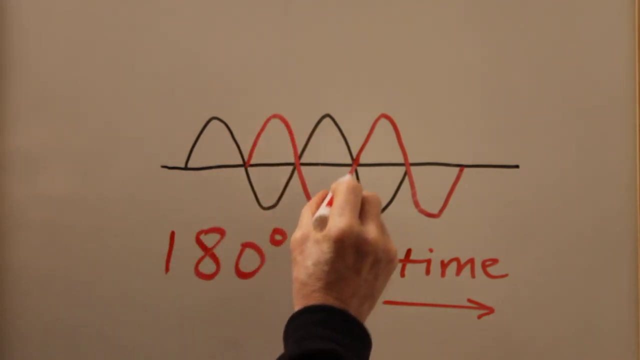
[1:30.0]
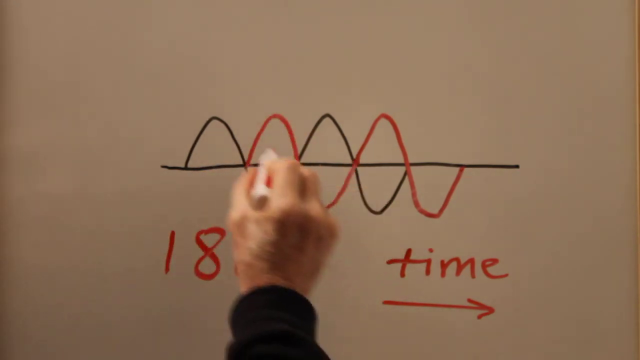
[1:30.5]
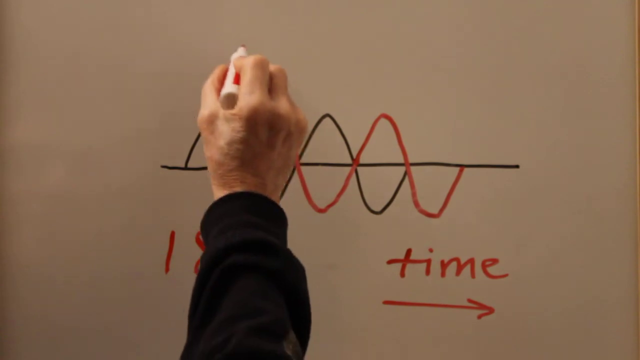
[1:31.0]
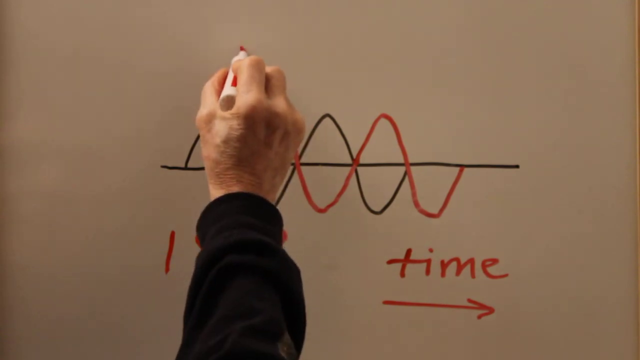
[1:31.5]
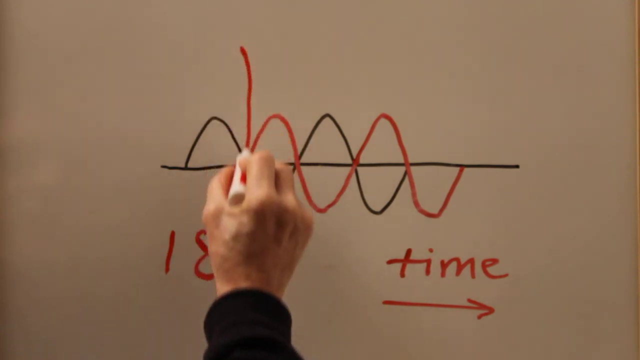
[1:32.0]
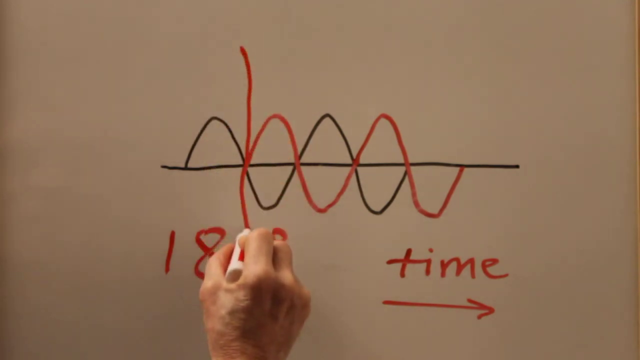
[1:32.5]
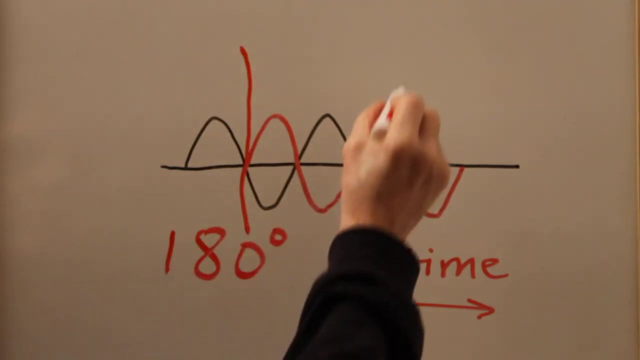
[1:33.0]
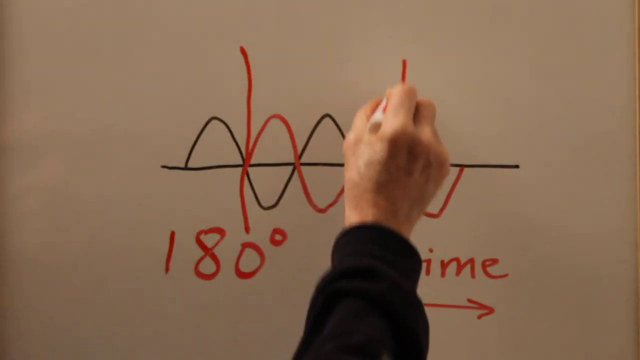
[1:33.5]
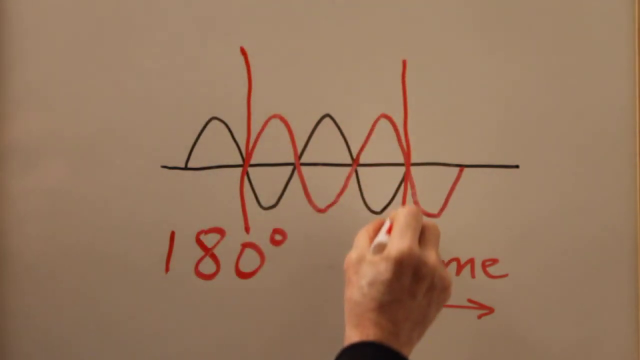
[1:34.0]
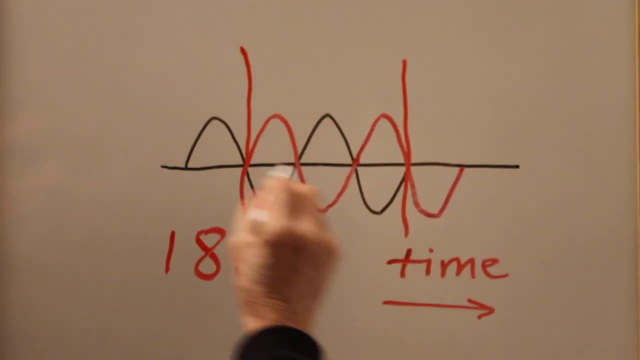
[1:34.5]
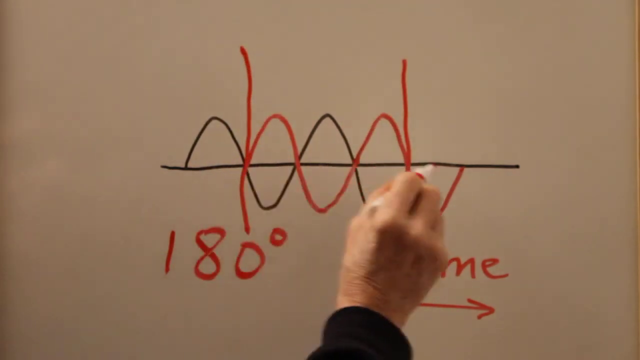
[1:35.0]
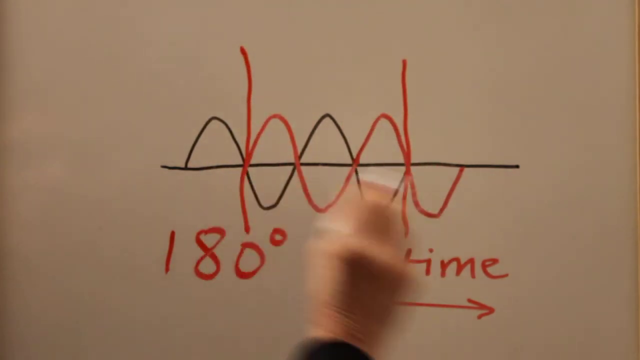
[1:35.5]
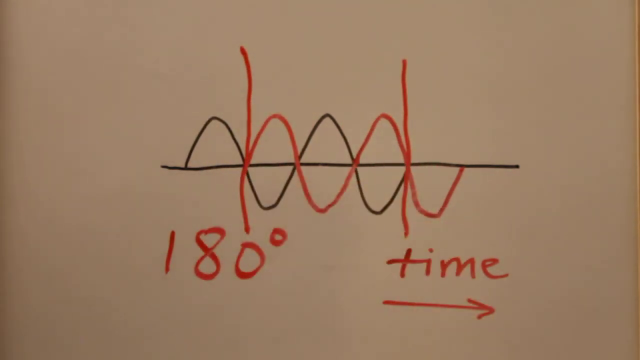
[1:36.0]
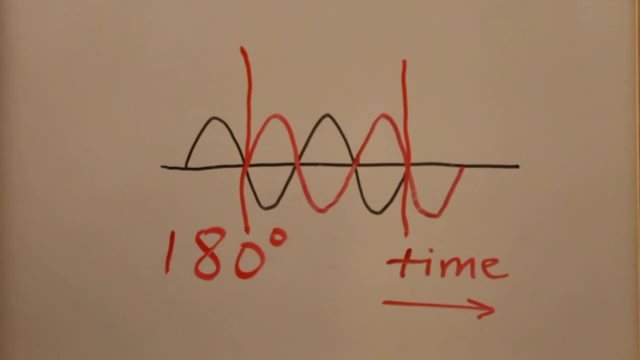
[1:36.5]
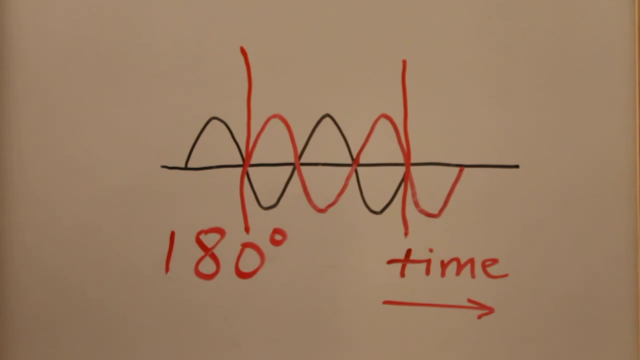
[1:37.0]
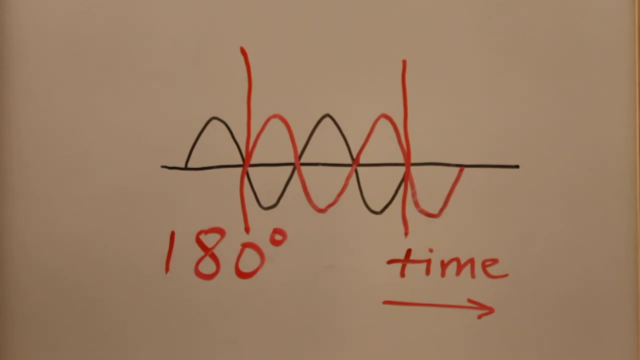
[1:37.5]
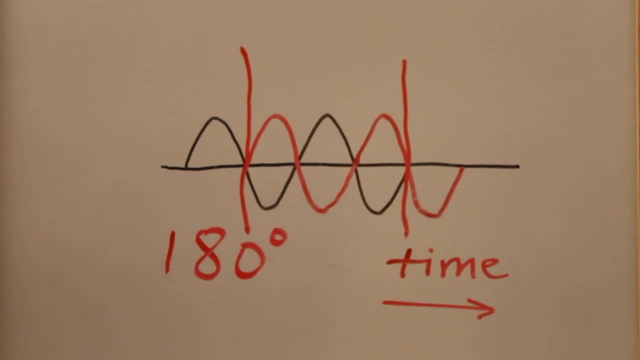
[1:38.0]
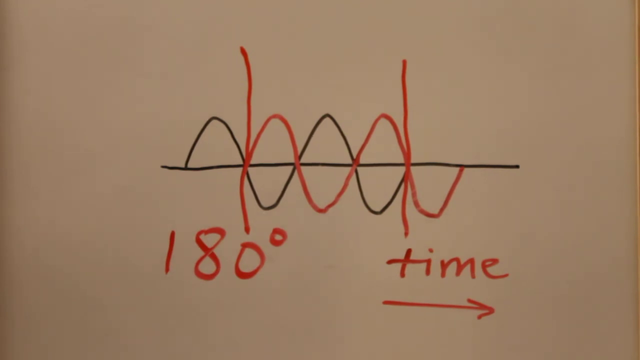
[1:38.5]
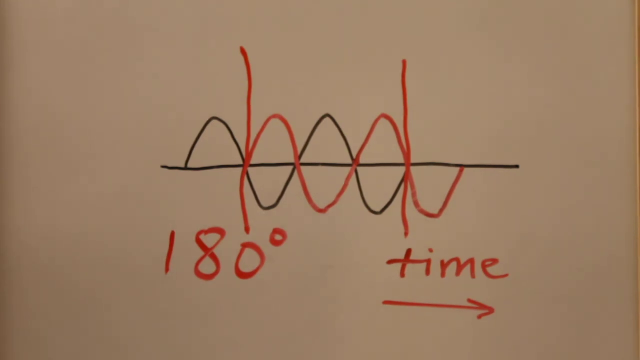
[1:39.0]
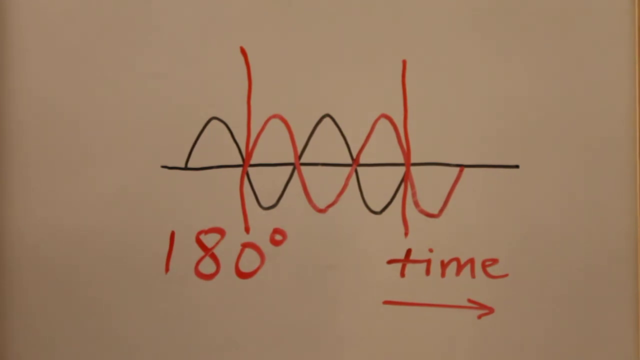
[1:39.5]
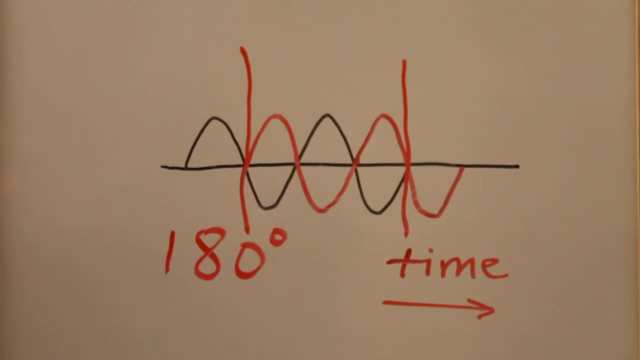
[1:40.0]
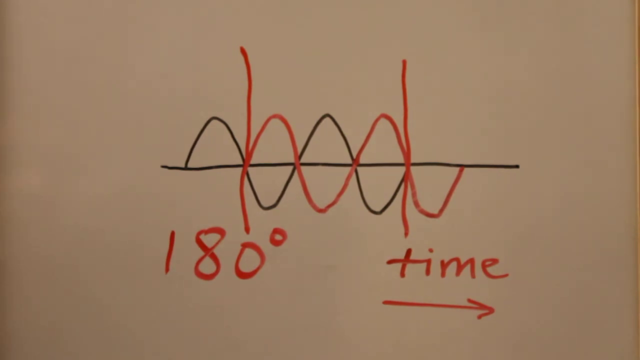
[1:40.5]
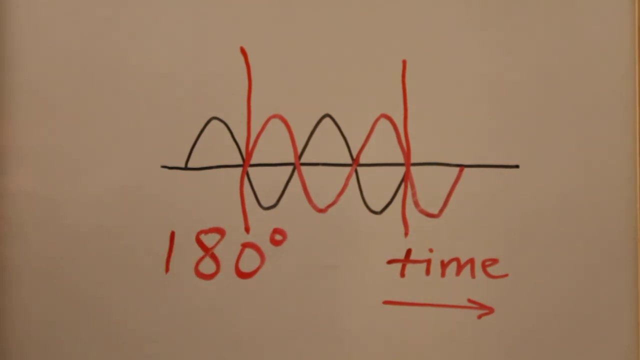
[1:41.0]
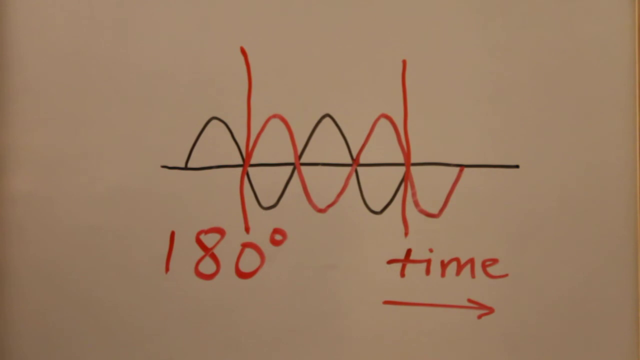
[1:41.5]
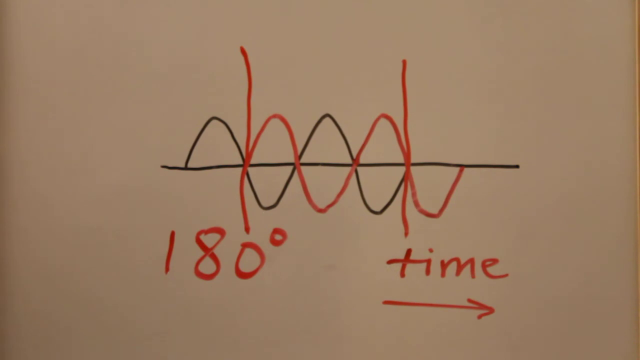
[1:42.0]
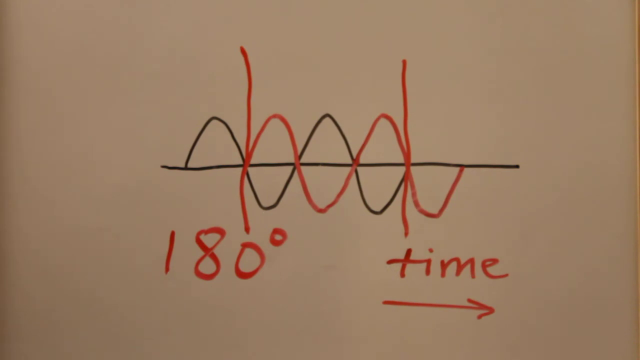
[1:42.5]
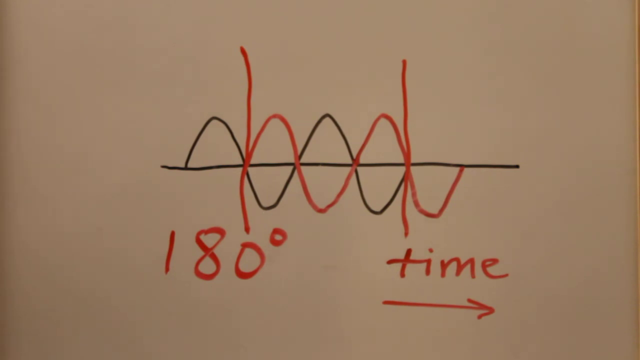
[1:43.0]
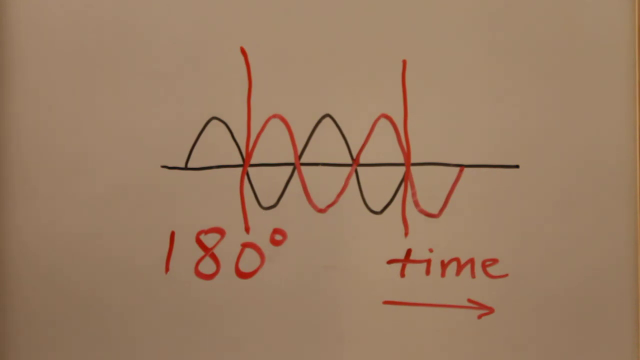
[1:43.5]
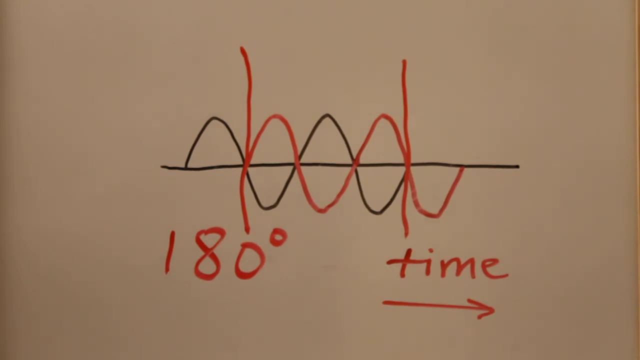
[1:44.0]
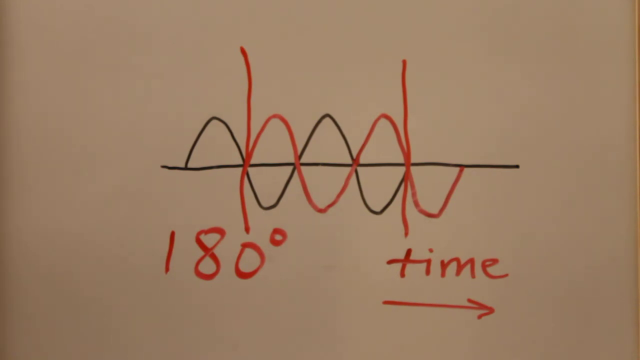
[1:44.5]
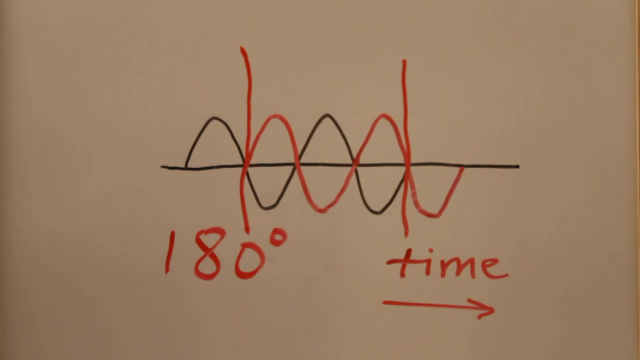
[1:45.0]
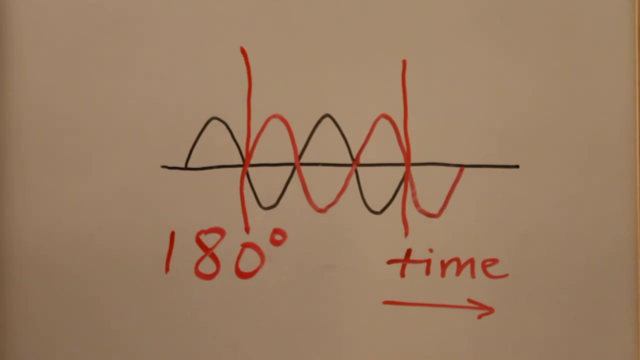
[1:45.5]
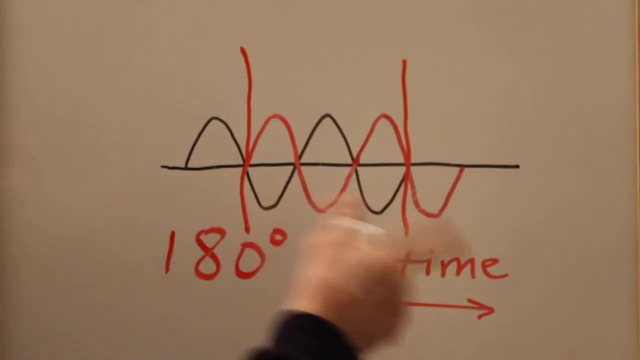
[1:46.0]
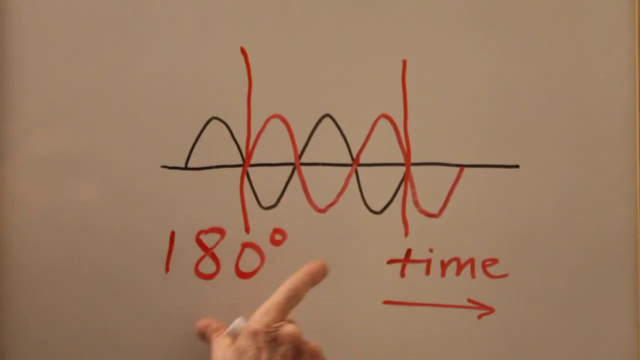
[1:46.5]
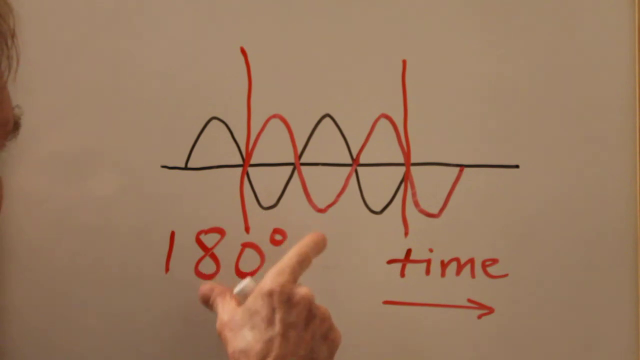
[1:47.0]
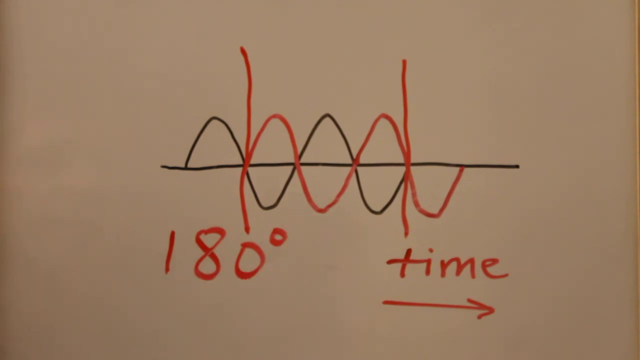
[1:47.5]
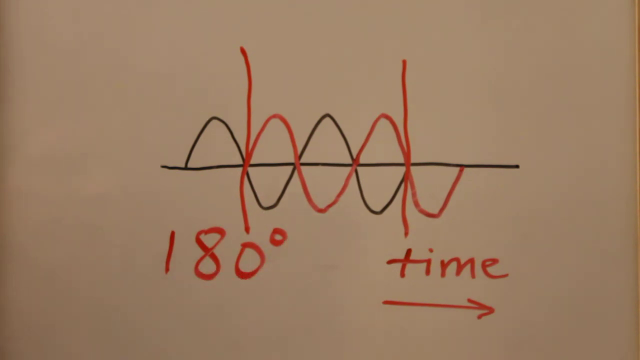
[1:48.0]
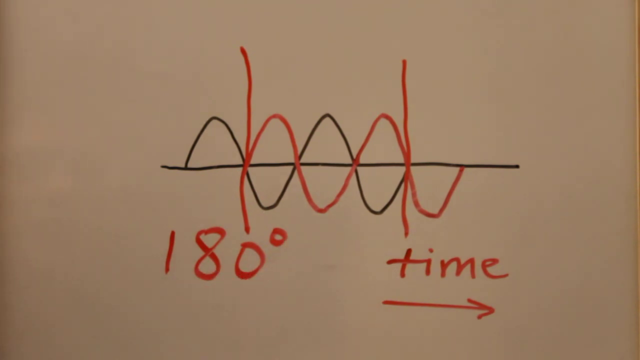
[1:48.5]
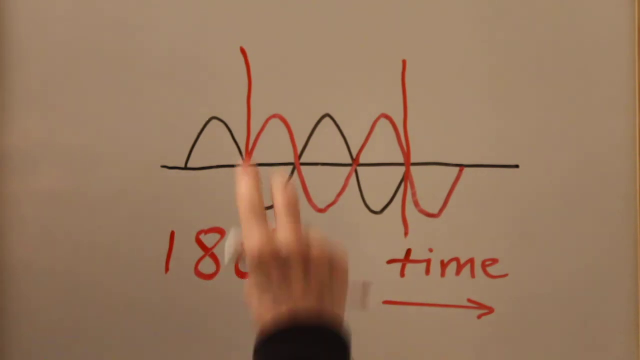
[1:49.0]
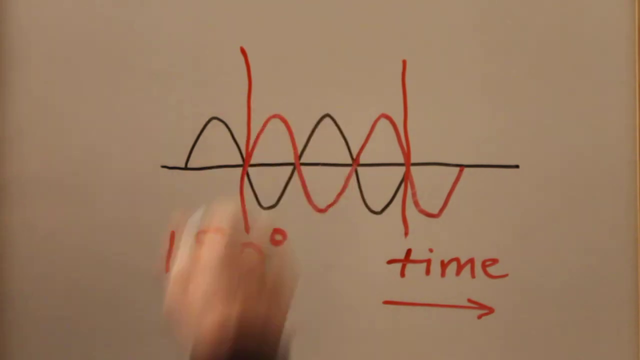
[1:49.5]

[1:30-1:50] He follows the progression of the red line and then draws two vertical red lines. On the left, he starts at the top, quite a bit above the curves, just after the first black hump, between the black and red humps, and draws down to just above the written 180. He does the same on the right, just after the second red hump. After drawing the two lines he gestures back and forth along the horizontal black line, and then everything goes off and he is not visible. His hand comes up briefly and points to the 180, then comes up again, with a finger pointed out, and waves over the whole graphic. At the end he puts up two fingers and closes them over the graphic. His head briefly pops in, showing a tiny flash of hair and face, but nothing really identifying.